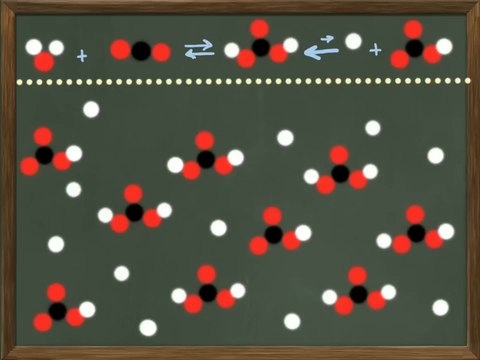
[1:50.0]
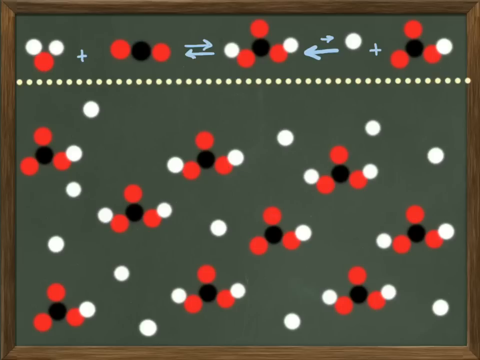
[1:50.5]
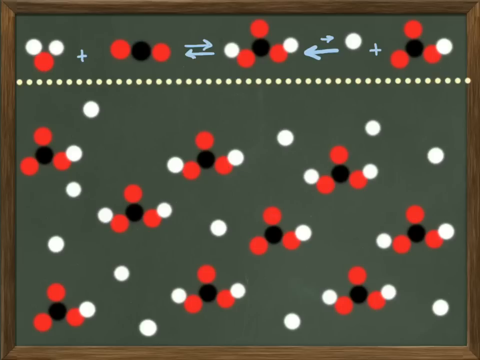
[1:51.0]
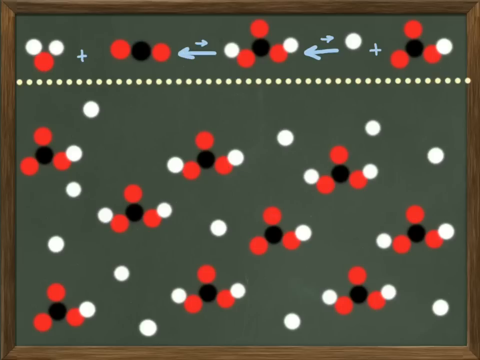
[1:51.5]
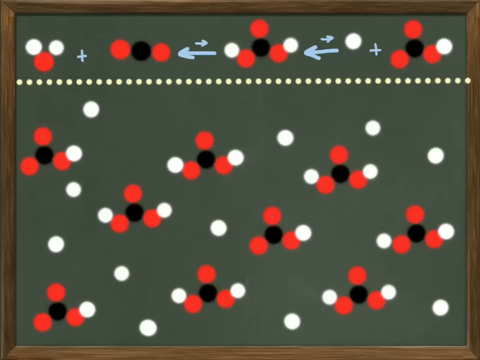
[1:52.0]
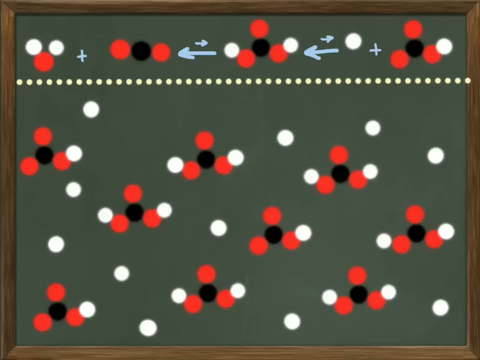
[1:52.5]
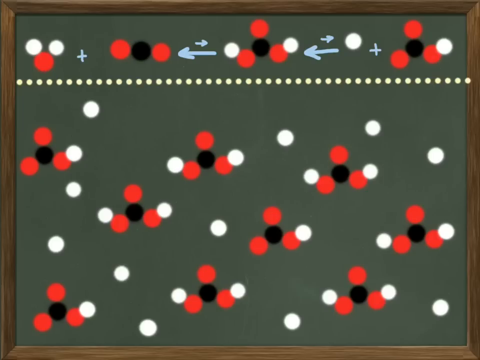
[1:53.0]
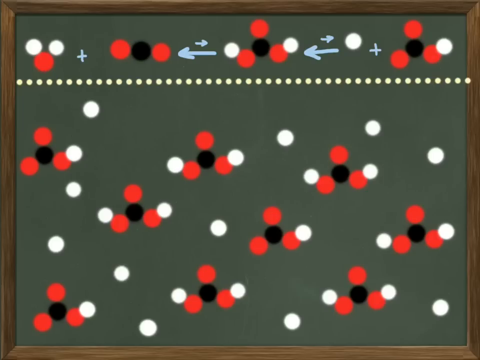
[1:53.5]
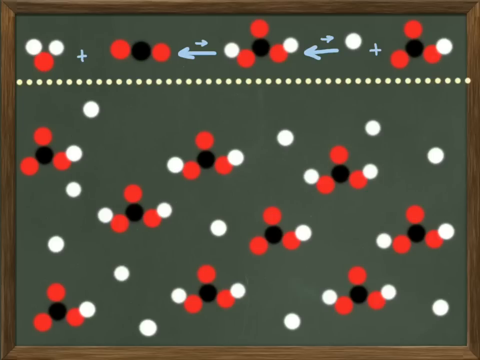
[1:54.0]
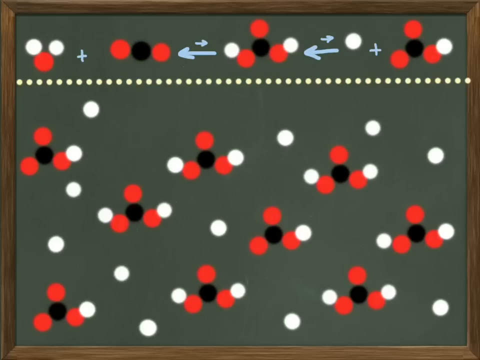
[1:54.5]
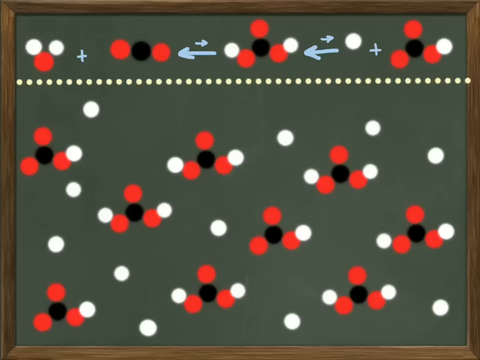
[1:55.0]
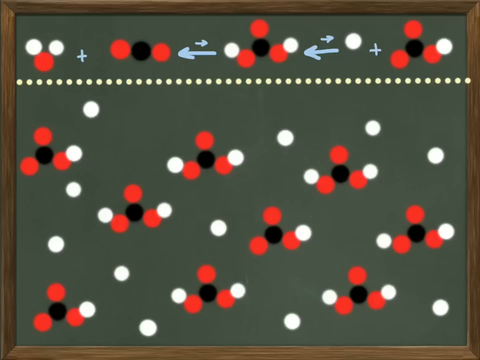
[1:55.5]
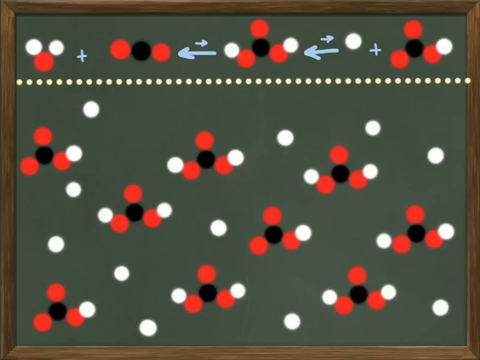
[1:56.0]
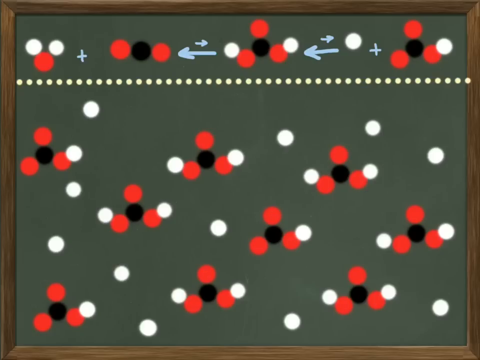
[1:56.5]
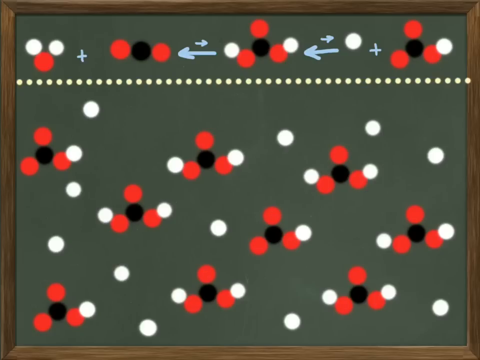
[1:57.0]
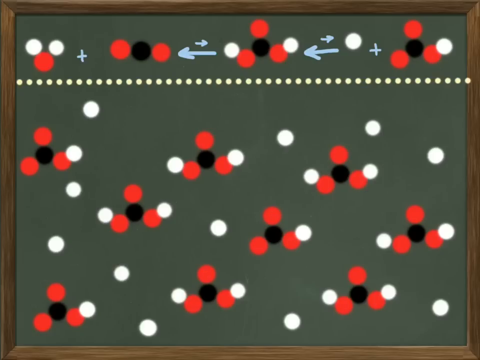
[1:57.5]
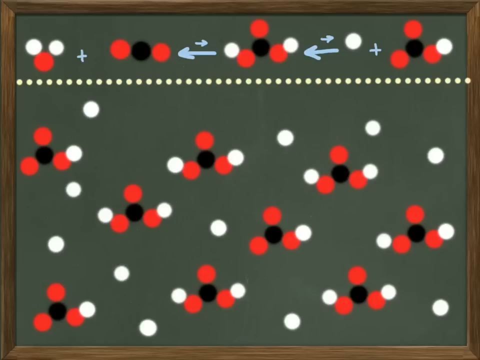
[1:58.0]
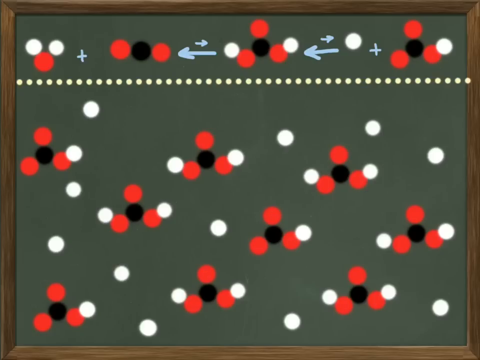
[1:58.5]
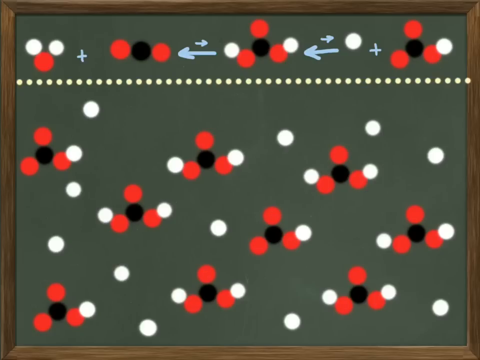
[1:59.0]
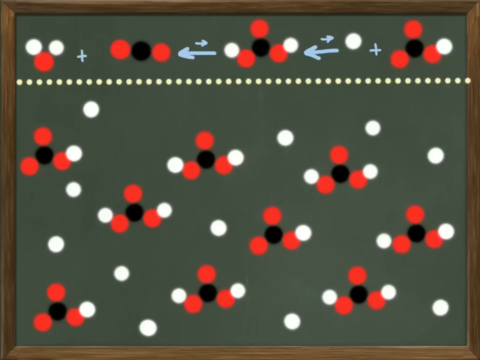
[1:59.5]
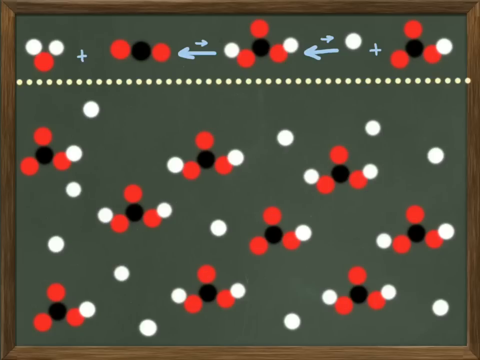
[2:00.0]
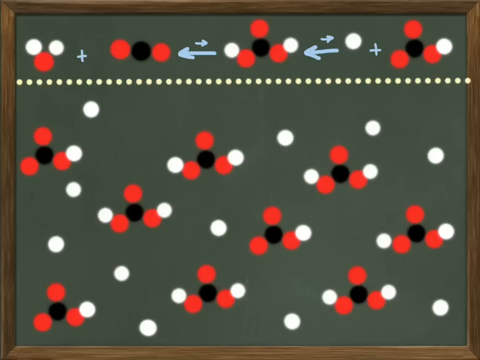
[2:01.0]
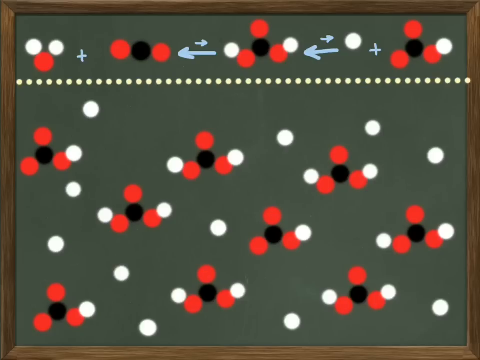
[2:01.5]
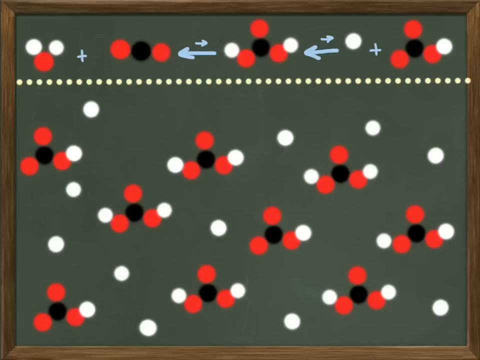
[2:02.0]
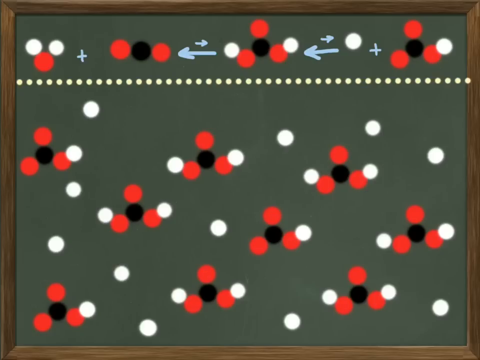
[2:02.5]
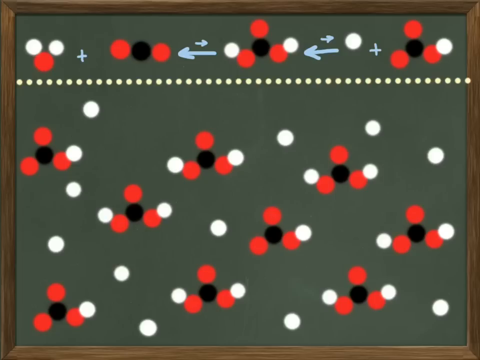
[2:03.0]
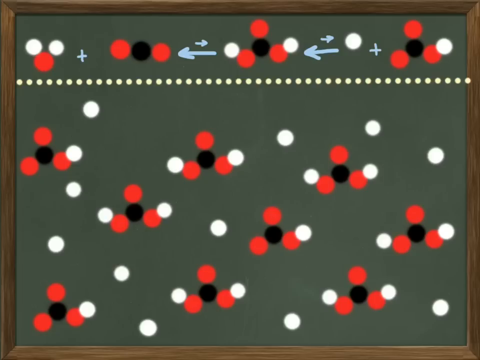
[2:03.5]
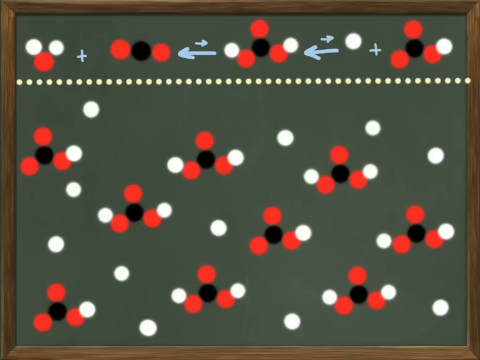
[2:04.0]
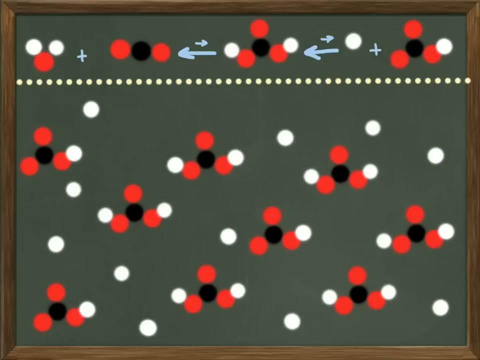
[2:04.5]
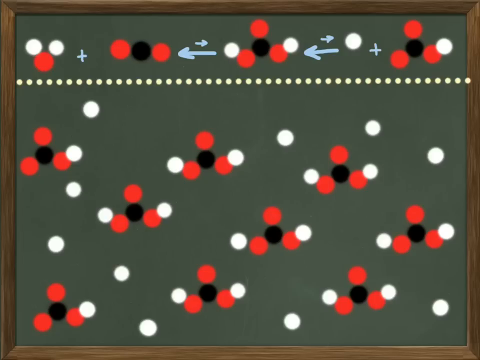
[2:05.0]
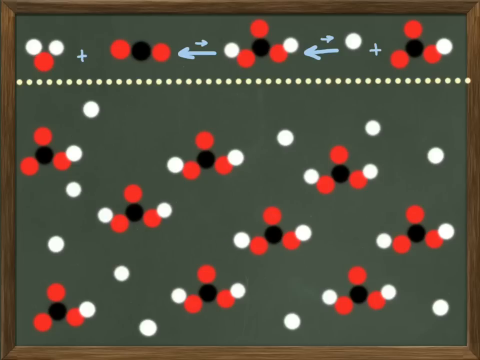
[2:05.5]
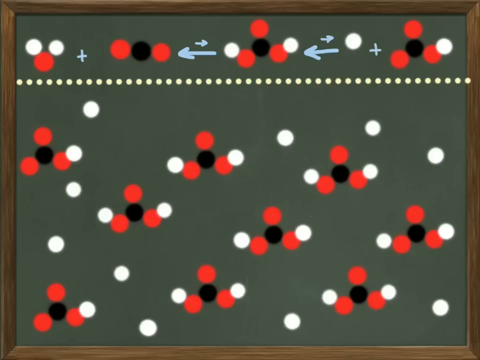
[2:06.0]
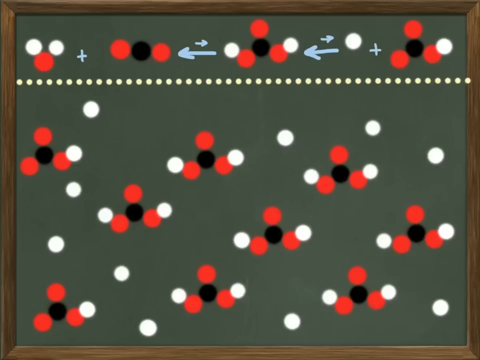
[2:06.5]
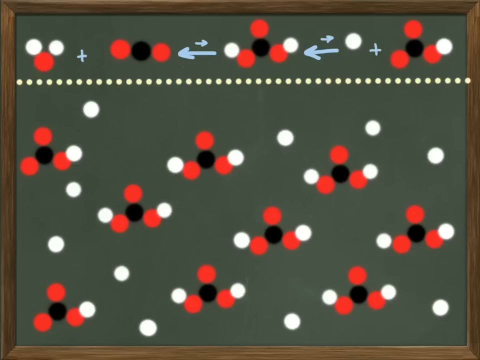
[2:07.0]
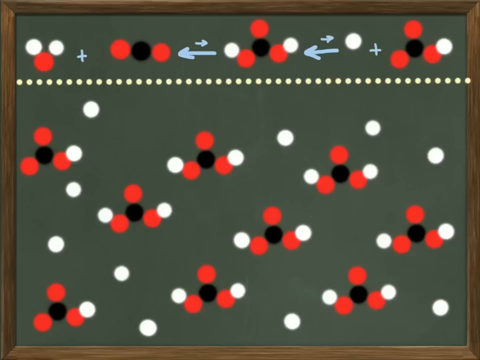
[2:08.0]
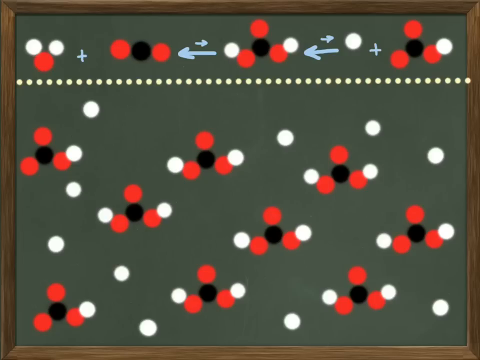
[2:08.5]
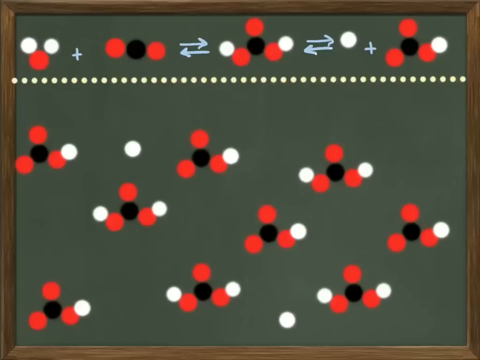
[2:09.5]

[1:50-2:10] The chalkboard has many equations, including one at the top, with arrows pointing left and right. There appear to be spaces on it, and a dotted line seems to be covering it up. Many different equations and the bicarbonate are visible, along with lots of red, black and white dots; the white dots are apparently oxygen. The green board is very full and busy.